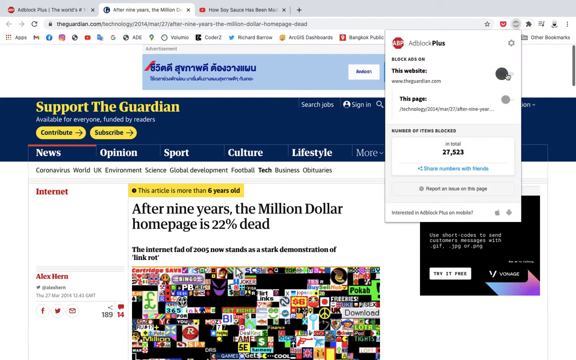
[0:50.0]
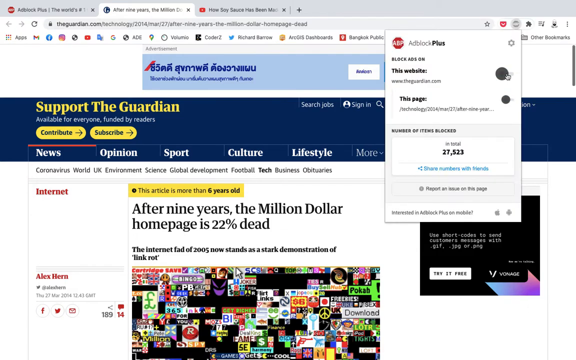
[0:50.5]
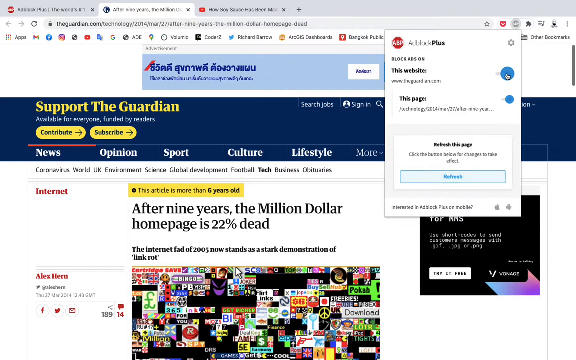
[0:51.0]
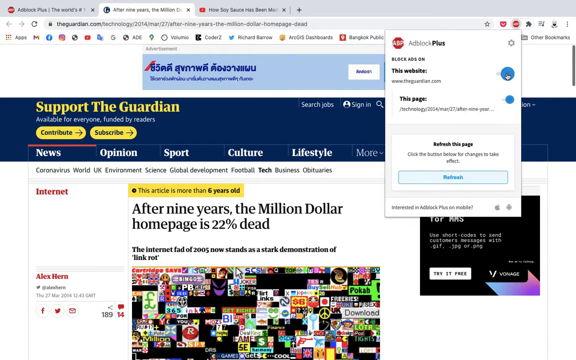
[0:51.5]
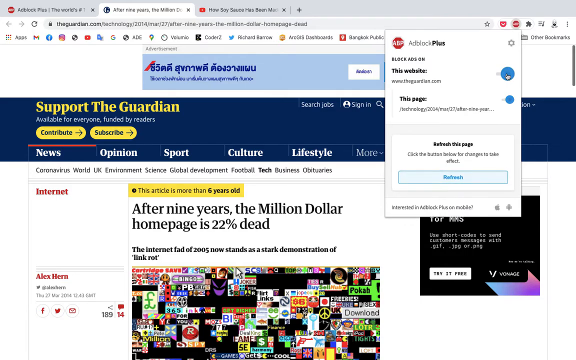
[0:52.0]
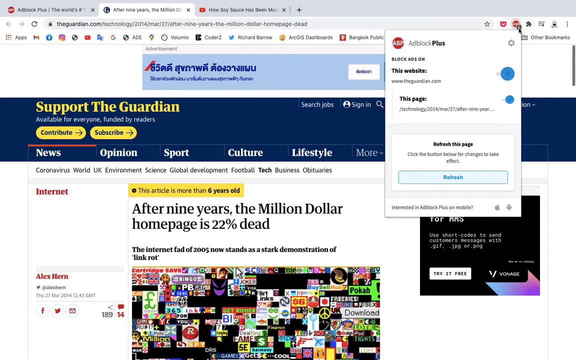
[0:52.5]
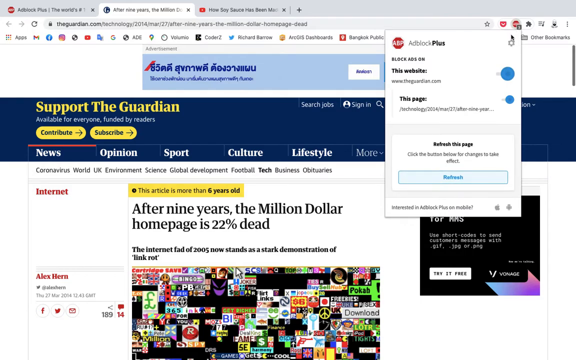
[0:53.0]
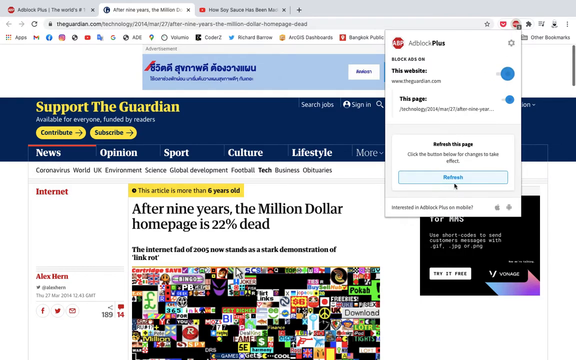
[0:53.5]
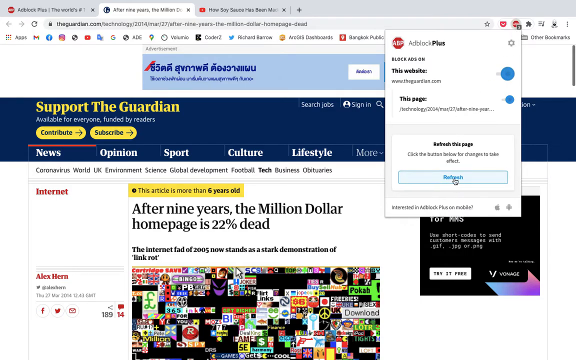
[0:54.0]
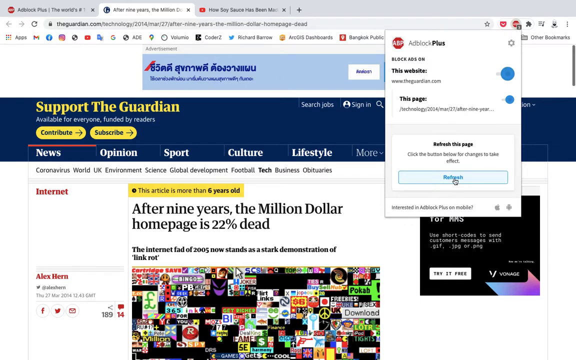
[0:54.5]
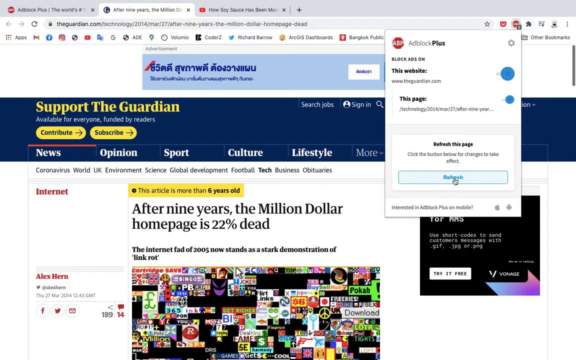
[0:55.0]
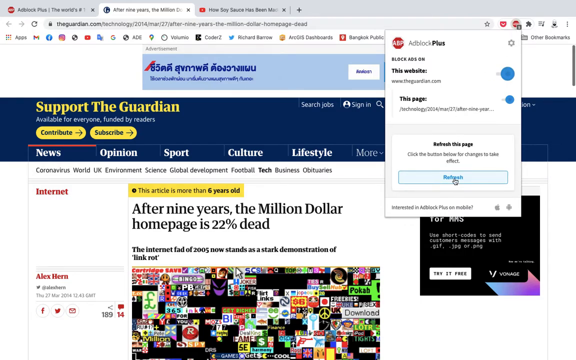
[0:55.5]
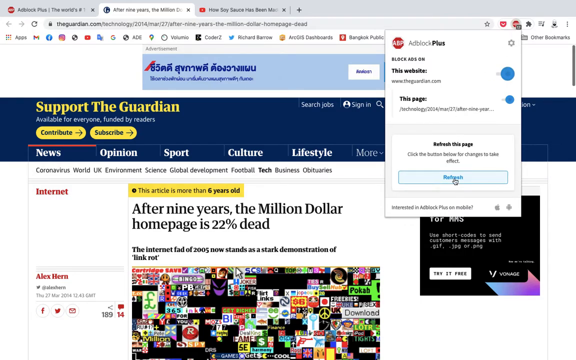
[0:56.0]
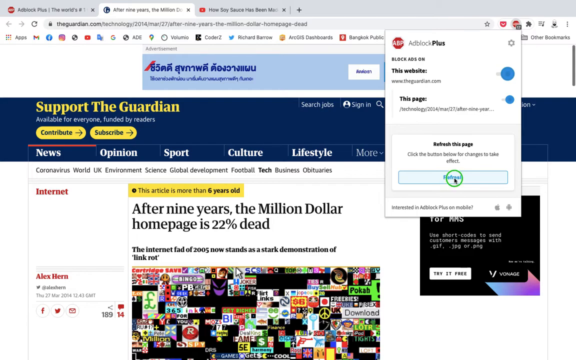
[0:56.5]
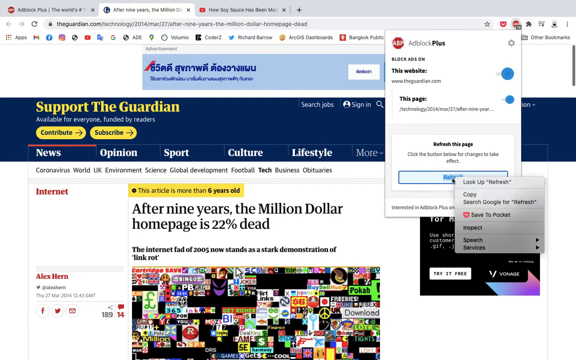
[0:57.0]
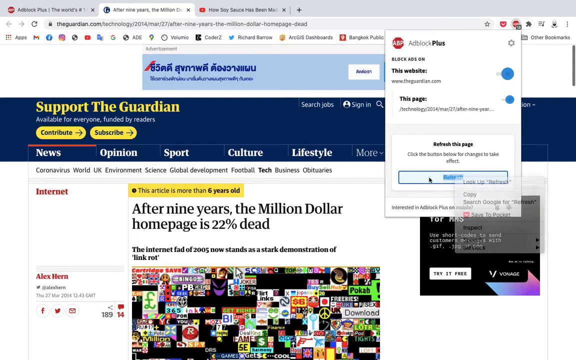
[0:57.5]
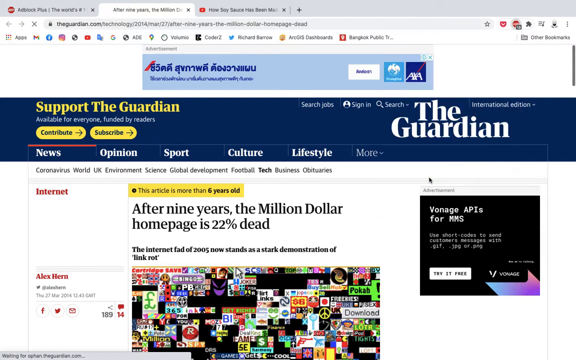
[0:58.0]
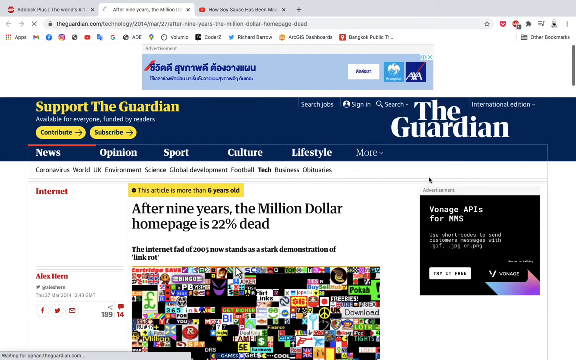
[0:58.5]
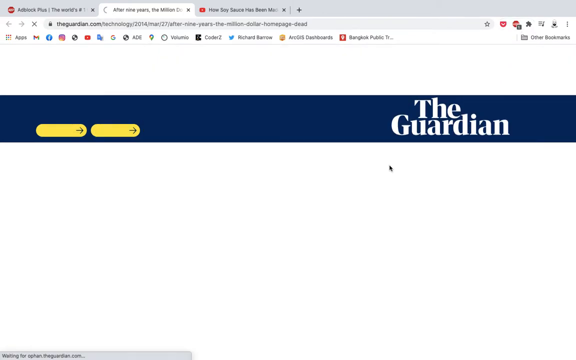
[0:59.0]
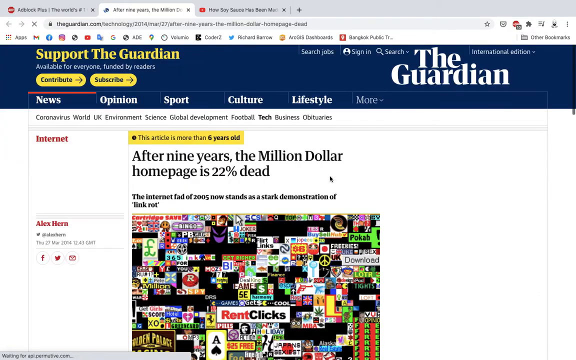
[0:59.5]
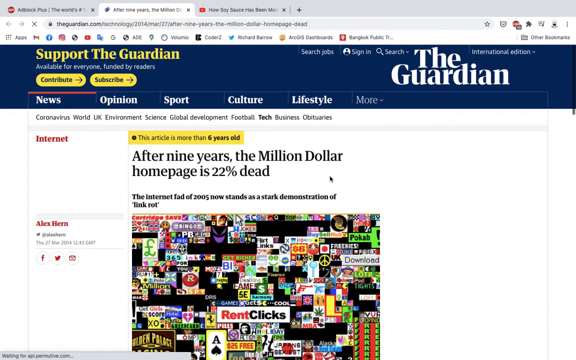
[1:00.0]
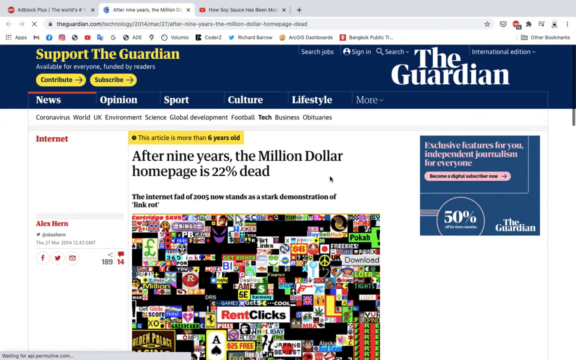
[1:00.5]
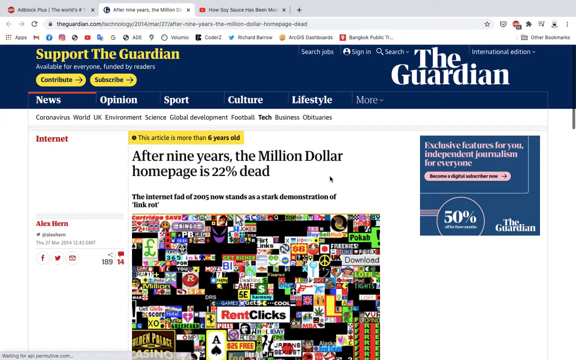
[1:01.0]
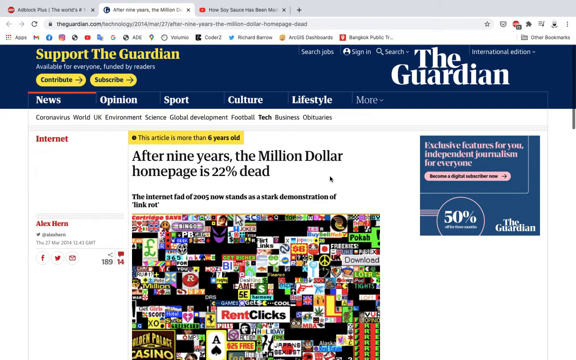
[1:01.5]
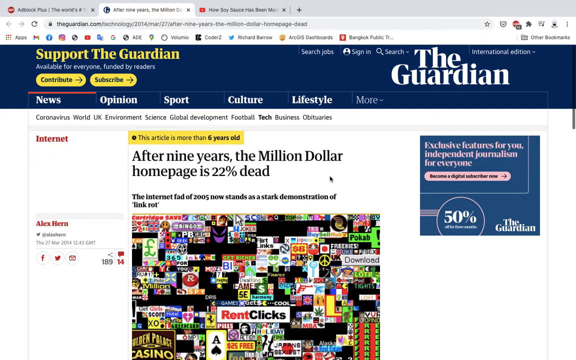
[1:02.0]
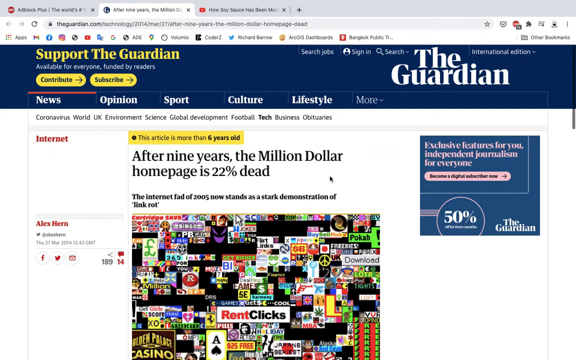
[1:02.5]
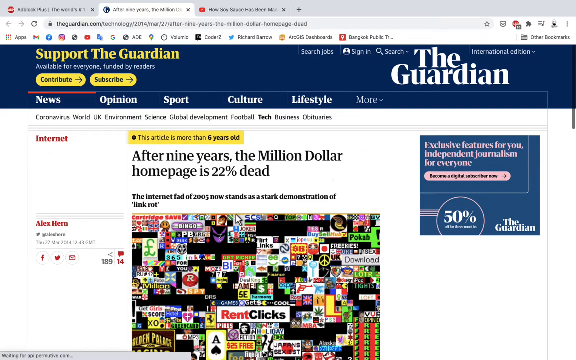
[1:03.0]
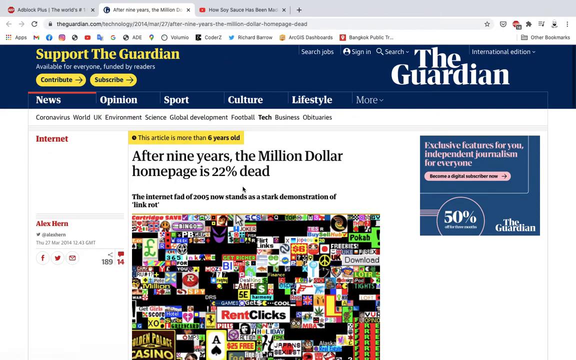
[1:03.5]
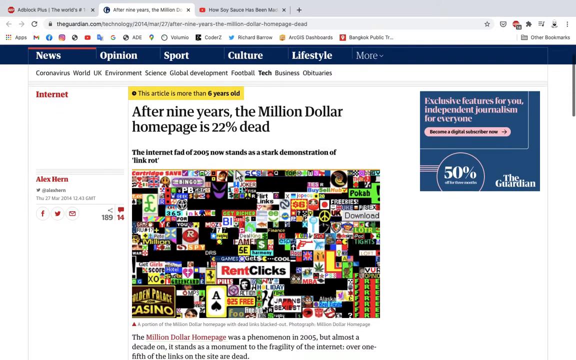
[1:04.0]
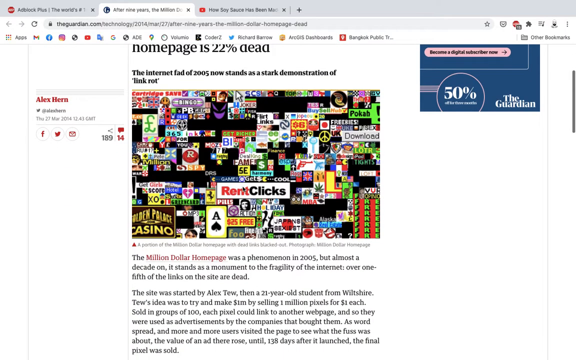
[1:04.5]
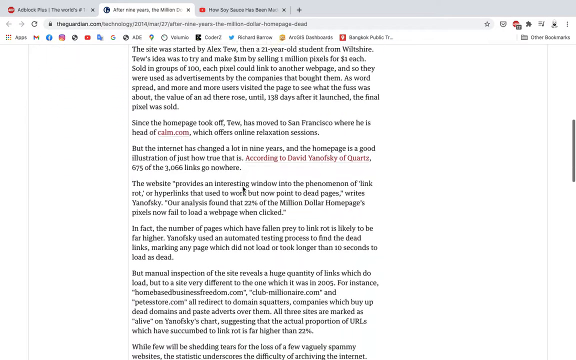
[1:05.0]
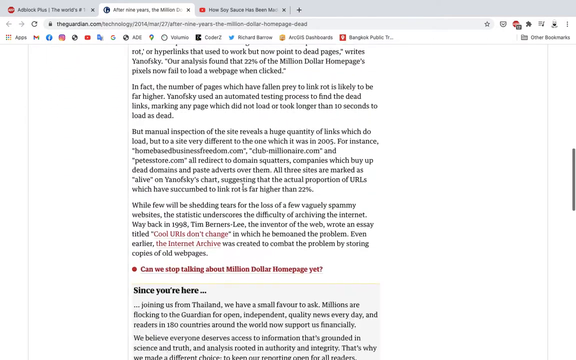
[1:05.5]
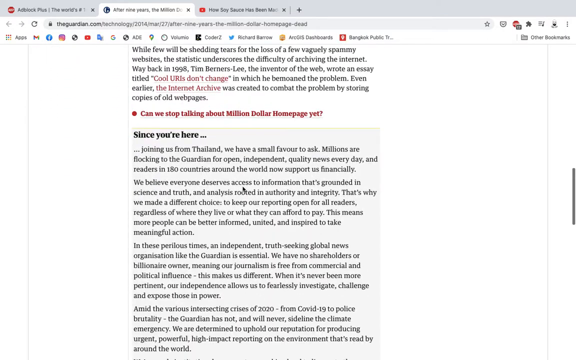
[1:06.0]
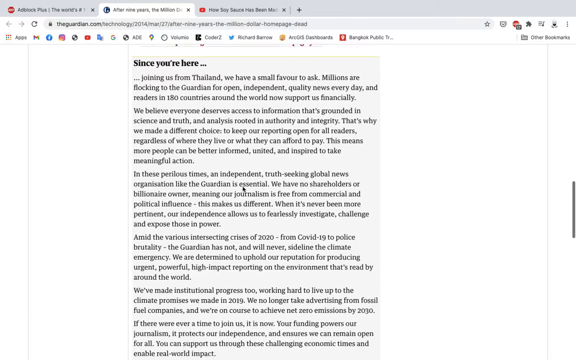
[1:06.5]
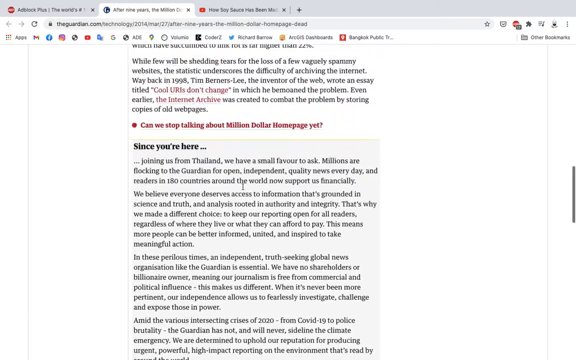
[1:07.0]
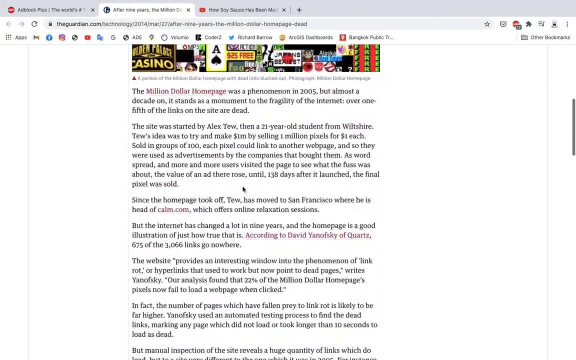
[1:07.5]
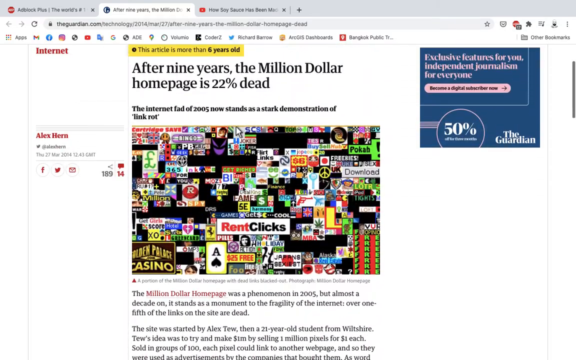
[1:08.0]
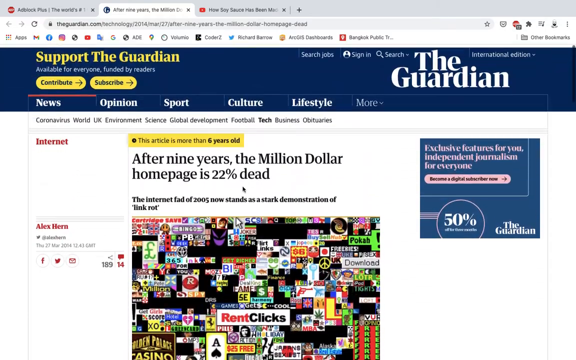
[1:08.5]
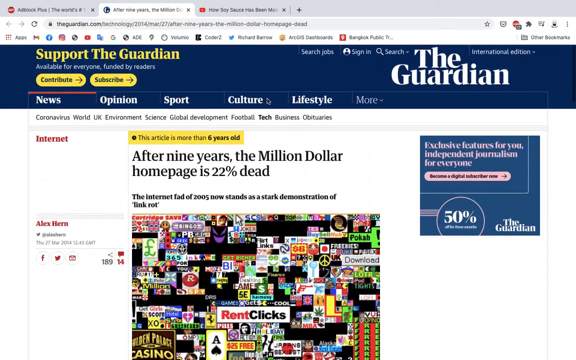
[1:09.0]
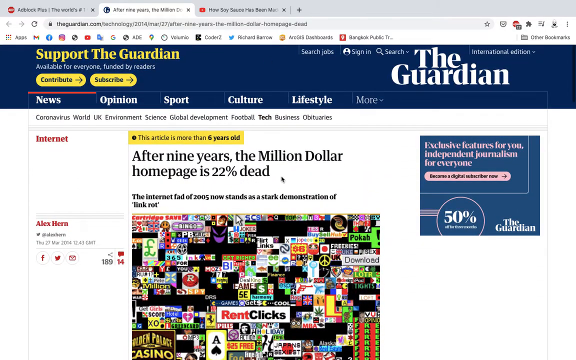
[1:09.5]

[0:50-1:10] The mouse cursor toggles on the option for this website, which appears to also toggle on the option for this page by default. The subsection below in the dialog box then changes to a message that says "refresh this page. Click the button below for changes to take effect." with a light blue clickable button that says "refresh" in a darker shade of blue. This replaces the previous section, which was titled "Number of Items" blocked and included the 27,523 number and the link to share these numbers with friends. The user clicks refresh, which closes the dialog box. The user then scrolls down the page again, showing that the ads have been removed from the Guardian web page, and scrolls back up to the top, again showing that the advertisements have been removed.